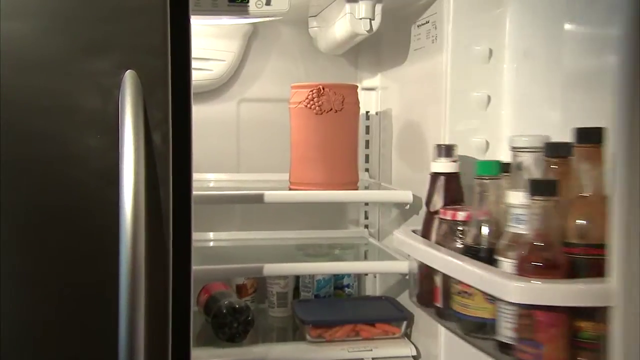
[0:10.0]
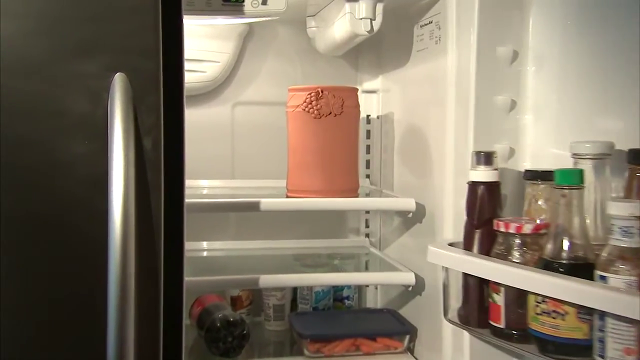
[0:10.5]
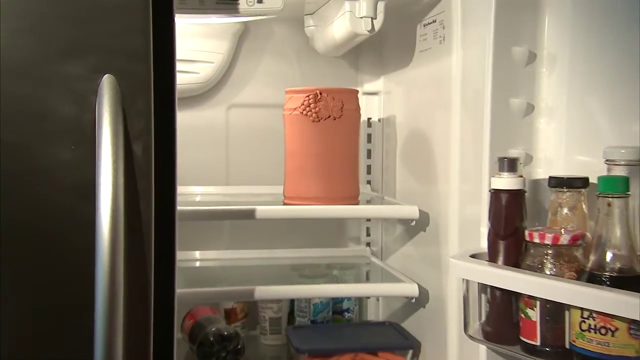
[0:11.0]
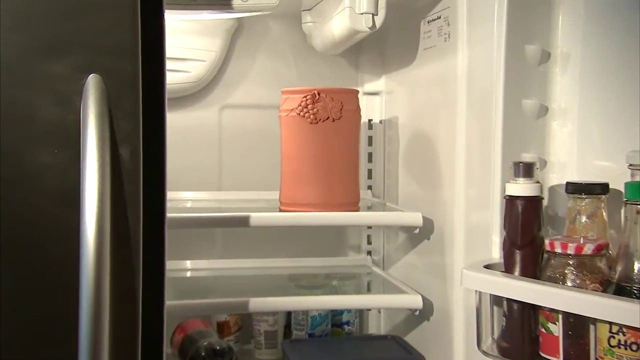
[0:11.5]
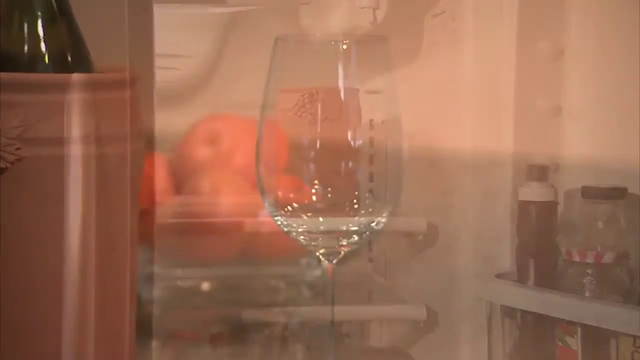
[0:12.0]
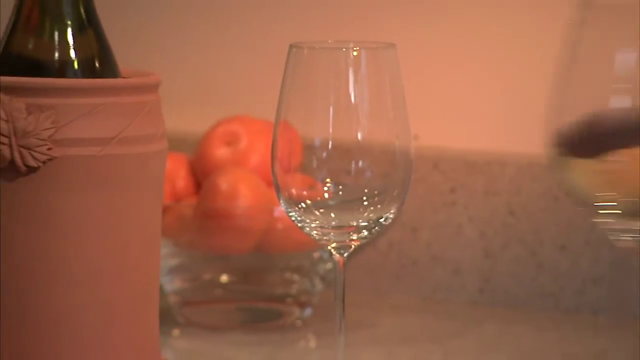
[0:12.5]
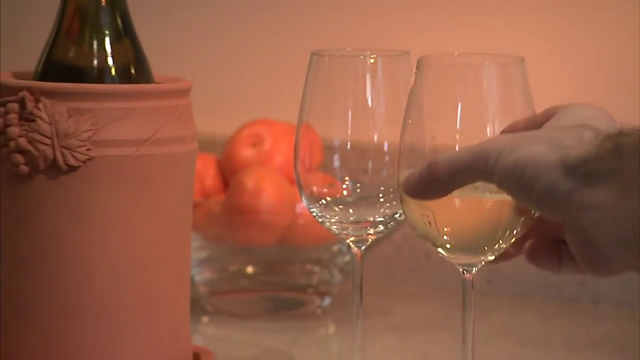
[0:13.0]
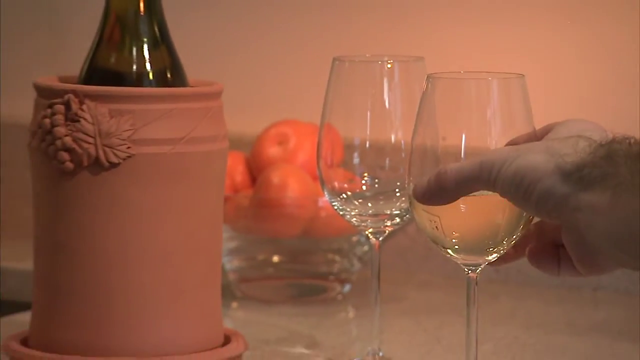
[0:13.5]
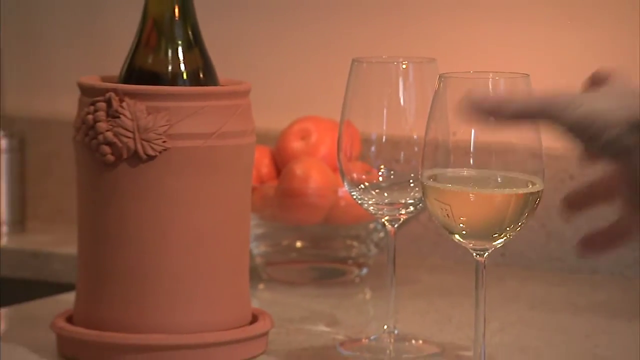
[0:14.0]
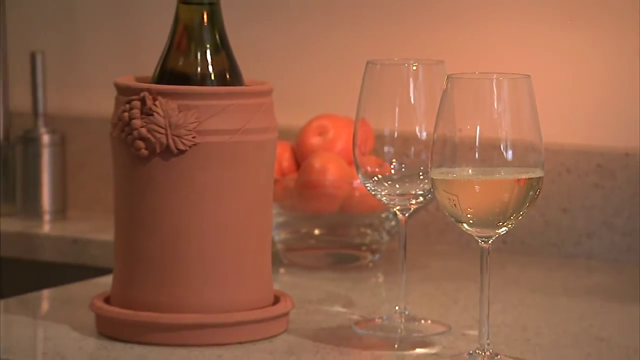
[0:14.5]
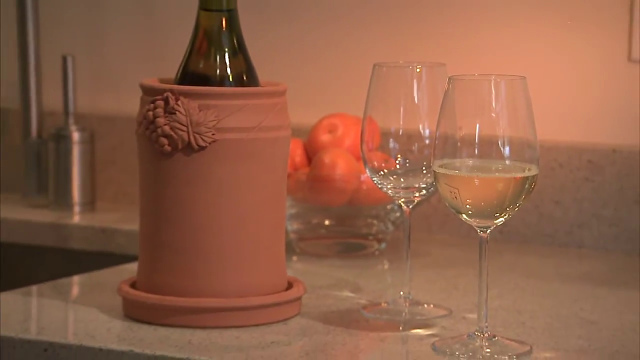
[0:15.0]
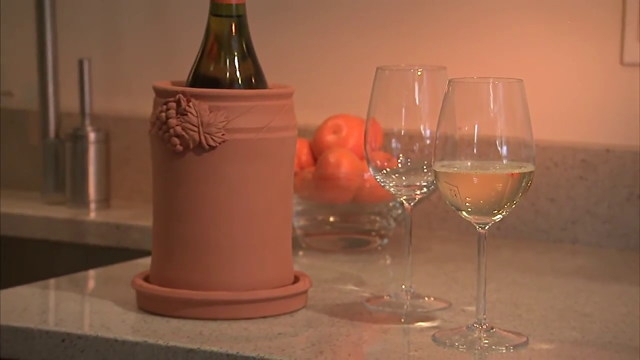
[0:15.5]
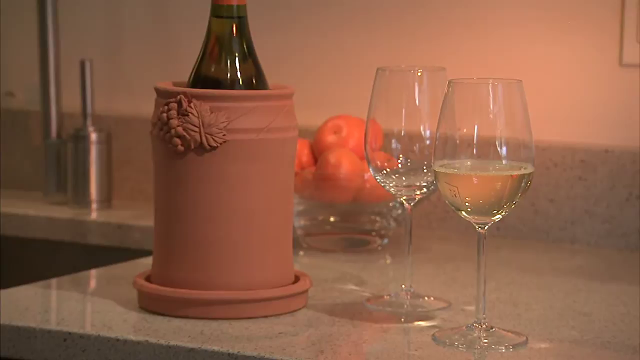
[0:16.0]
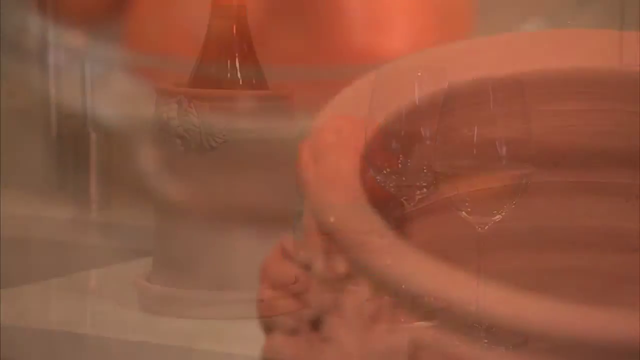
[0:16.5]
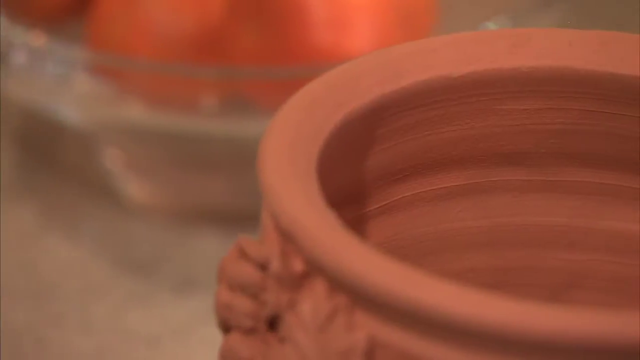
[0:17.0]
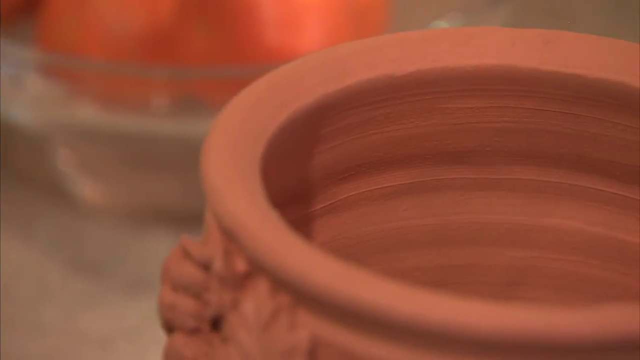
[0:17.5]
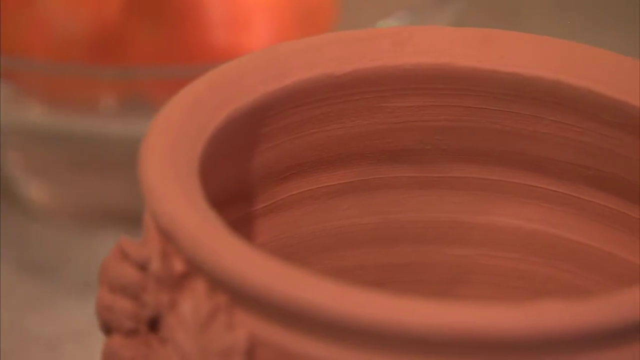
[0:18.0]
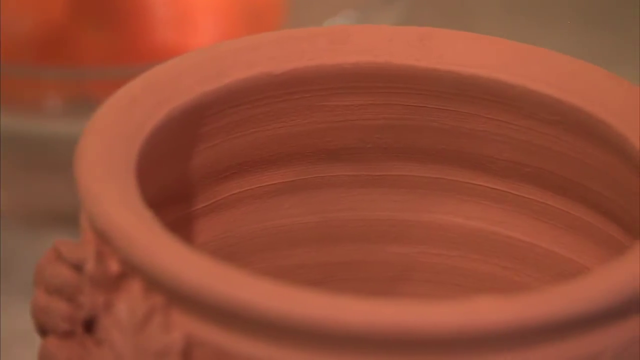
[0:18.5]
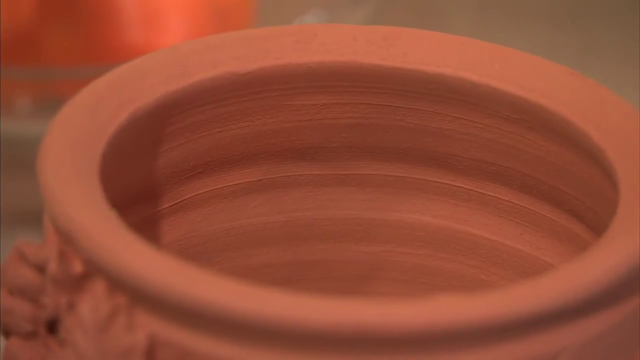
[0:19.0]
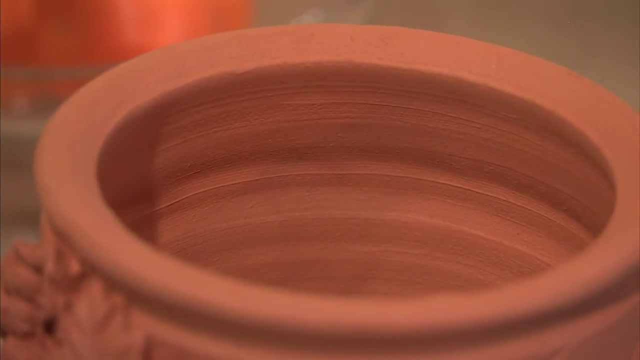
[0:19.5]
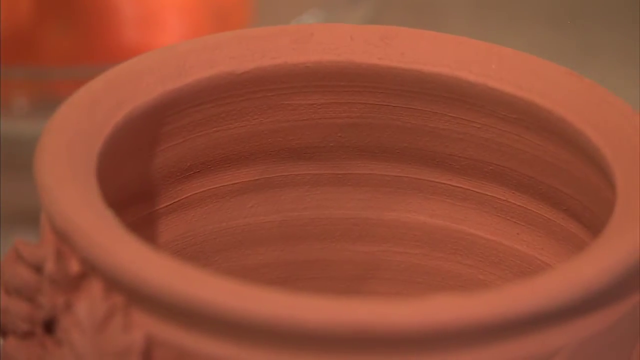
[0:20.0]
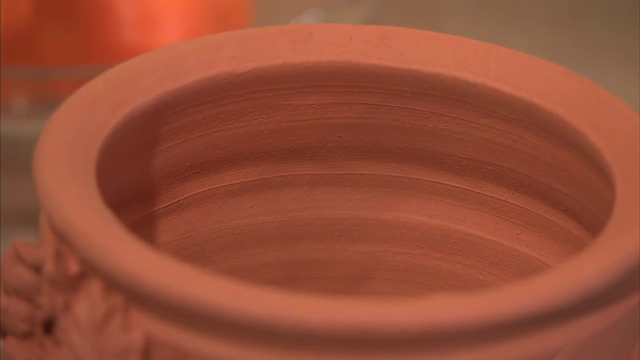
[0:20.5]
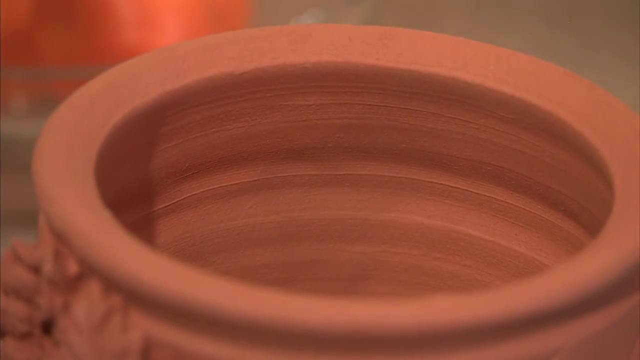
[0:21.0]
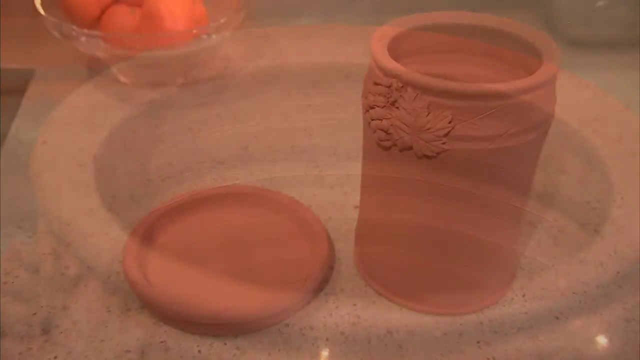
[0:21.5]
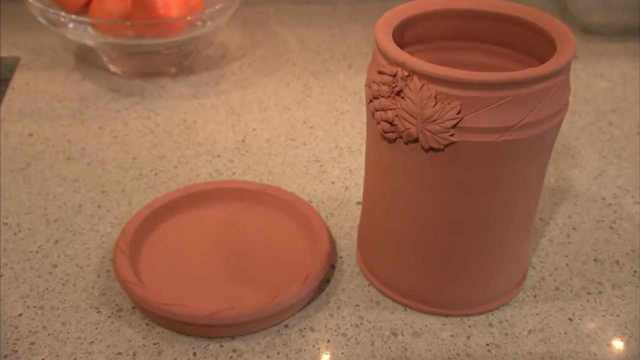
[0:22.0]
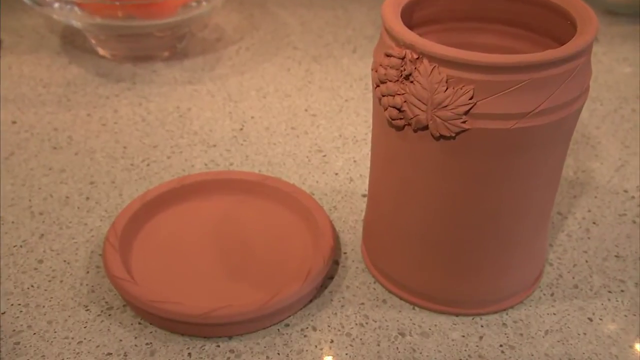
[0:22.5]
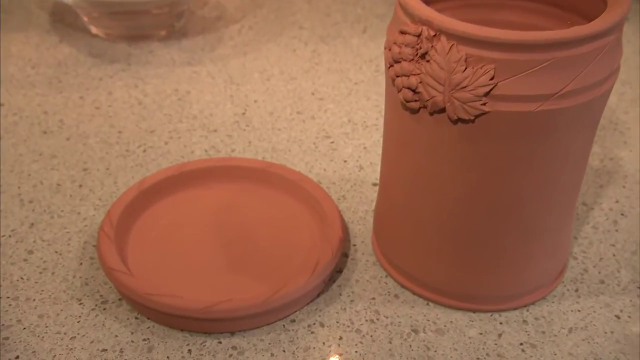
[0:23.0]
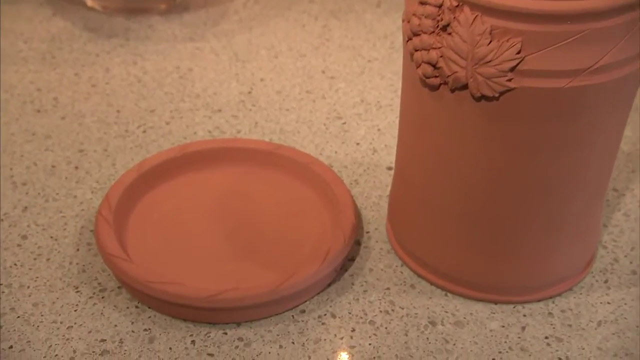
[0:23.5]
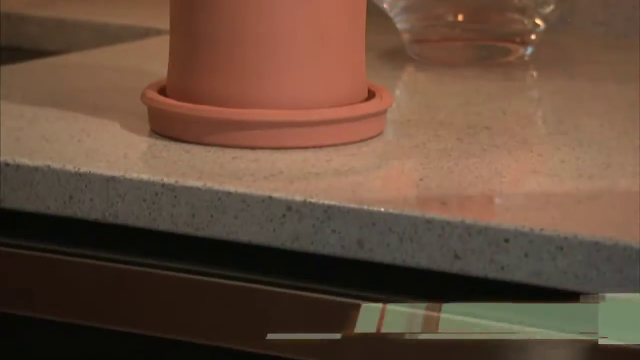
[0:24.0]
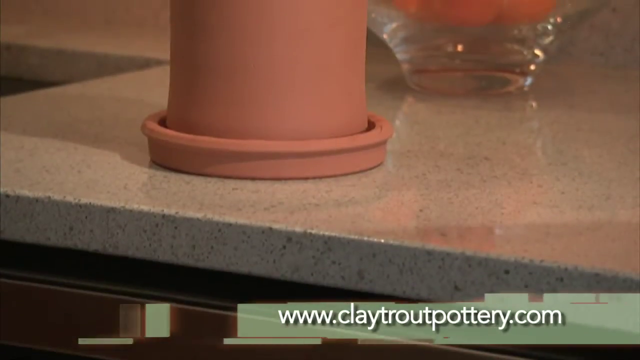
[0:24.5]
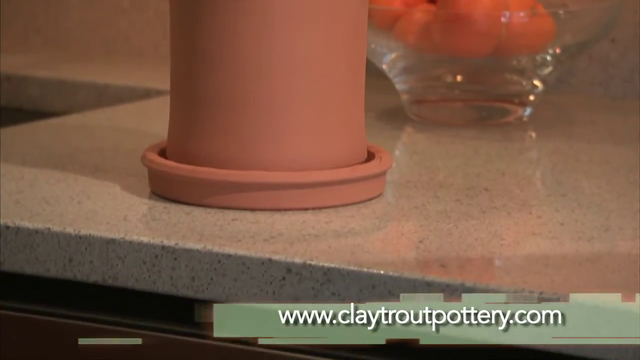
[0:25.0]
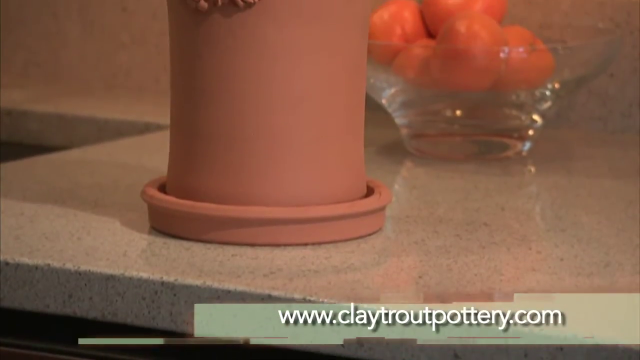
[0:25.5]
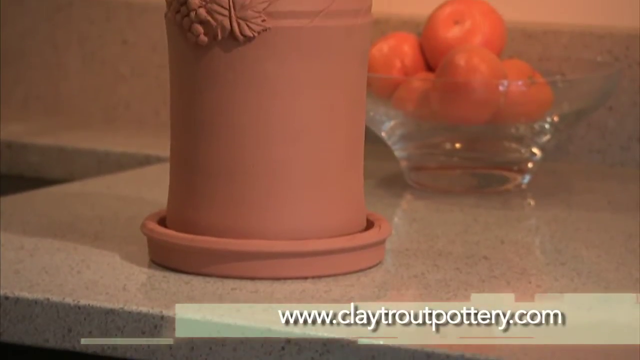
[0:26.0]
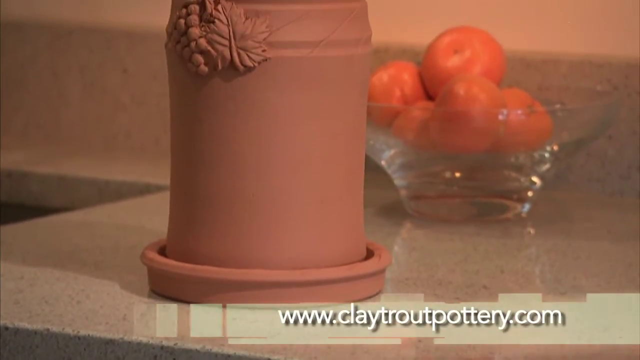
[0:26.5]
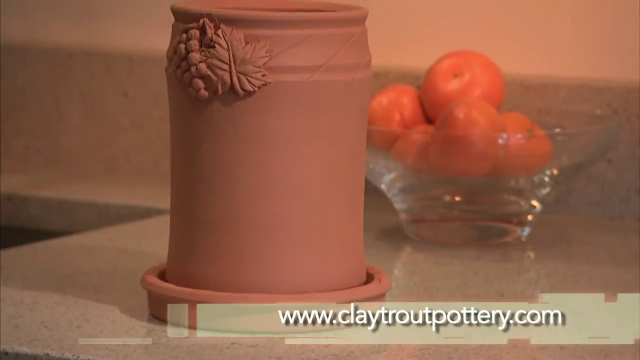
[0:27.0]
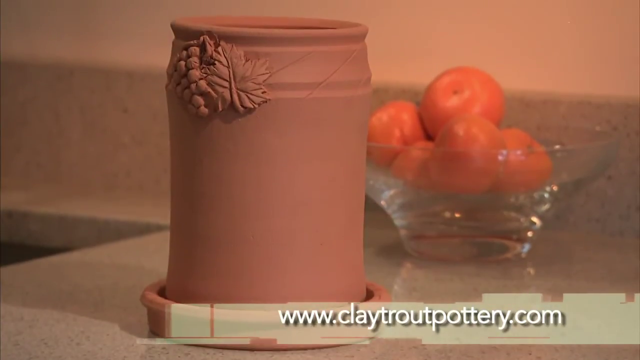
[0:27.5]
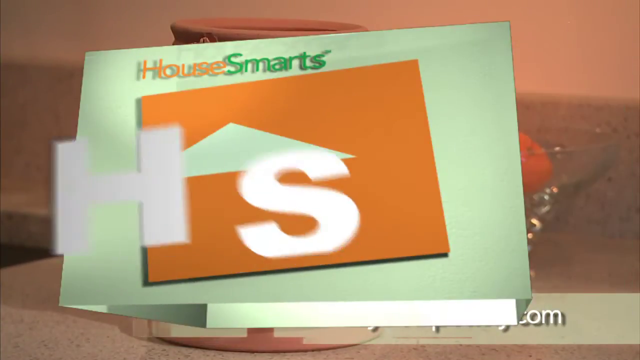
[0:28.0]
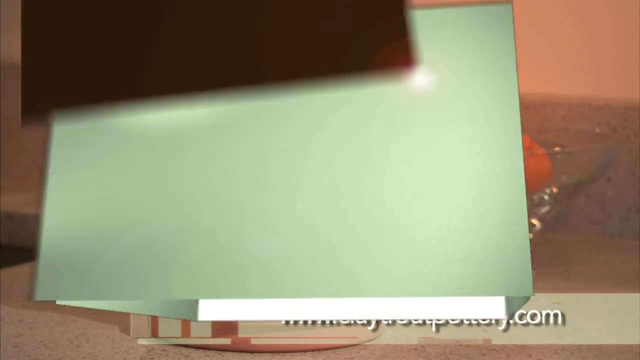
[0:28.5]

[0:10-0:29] The fridge door is open, and on the top shelf is a pottery vase with a grape leaf and a bunch of grapes designed on the corner. Someone removes the pottery vase, and the camera zooms in on it. A hand on a bottle of wine pours wine into a glass. There are two glasses on a table: one is empty and the other has white wine in it. The video zooms out to show the two glasses on the table and a glass bowl with some nectarines, and inside the vase is a wine glass. At the bottom of the screen is the text "ww.claytroutpottery.com". The video zooms in and out, and the background changes.